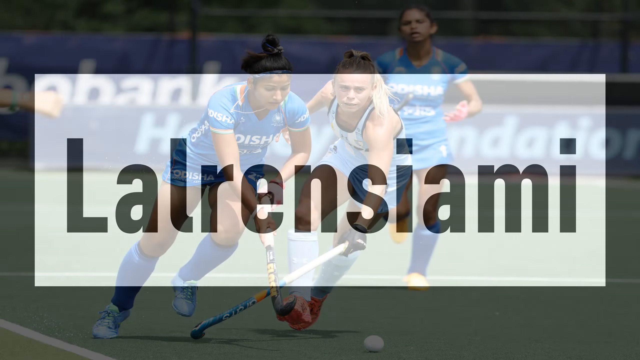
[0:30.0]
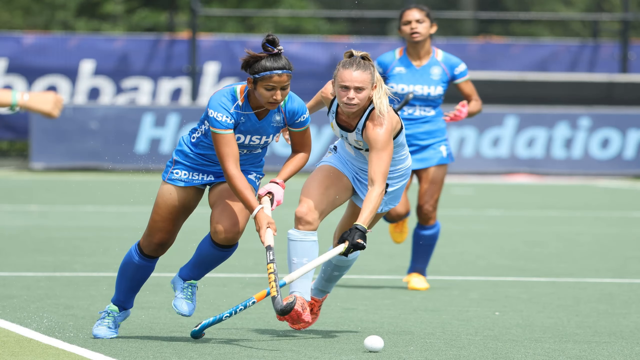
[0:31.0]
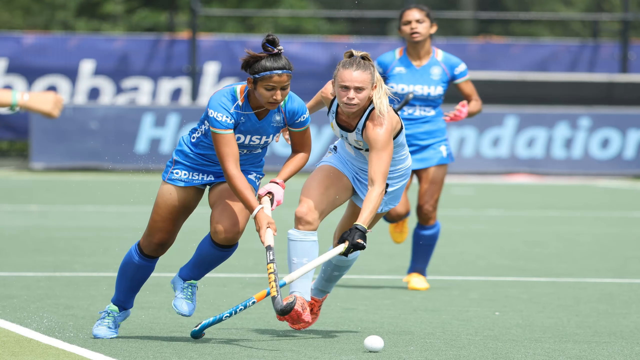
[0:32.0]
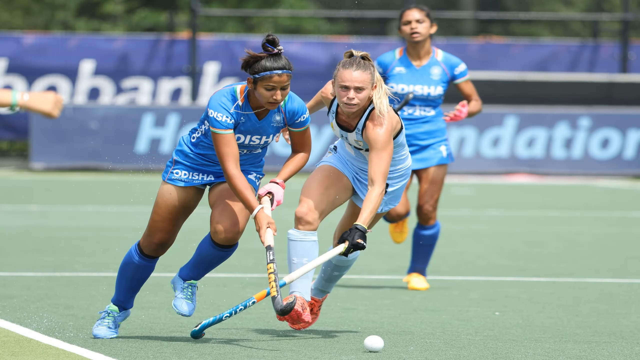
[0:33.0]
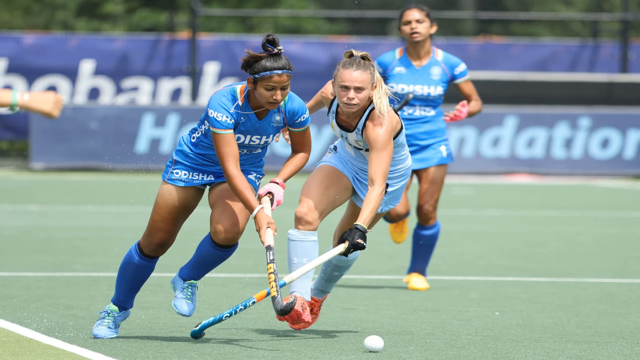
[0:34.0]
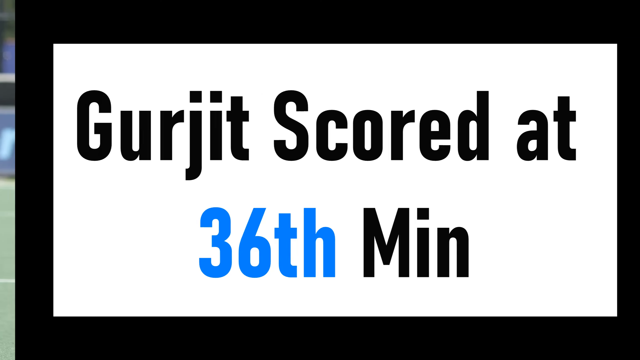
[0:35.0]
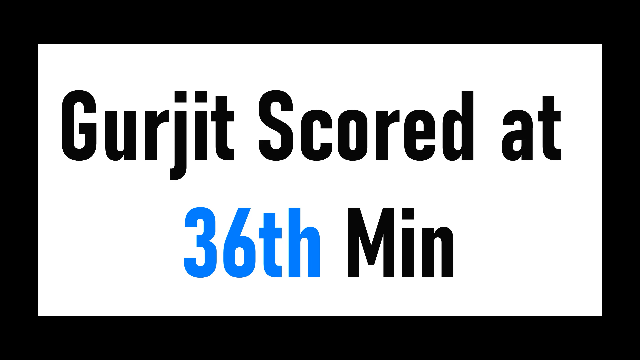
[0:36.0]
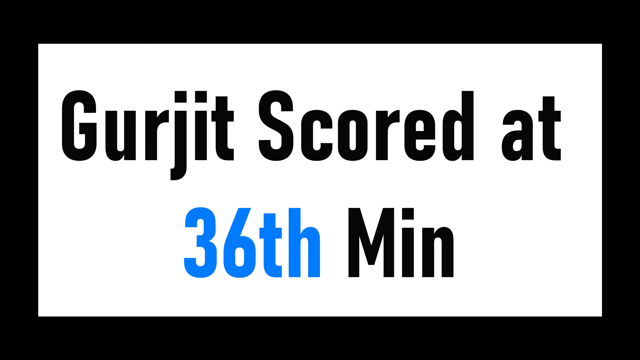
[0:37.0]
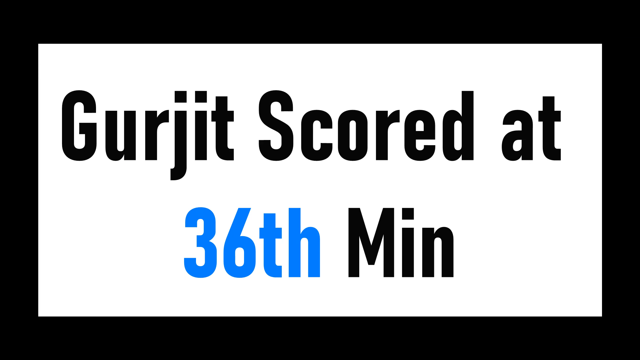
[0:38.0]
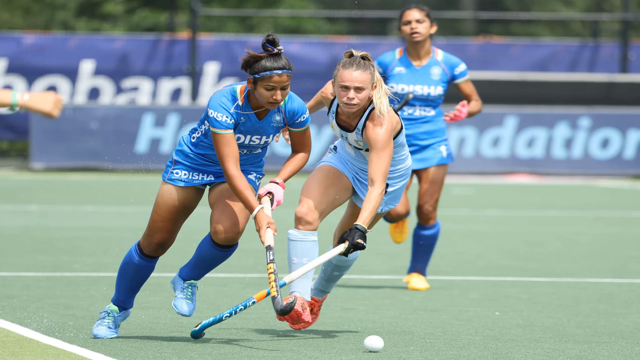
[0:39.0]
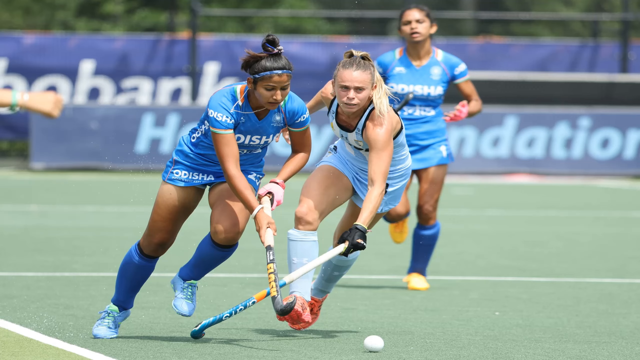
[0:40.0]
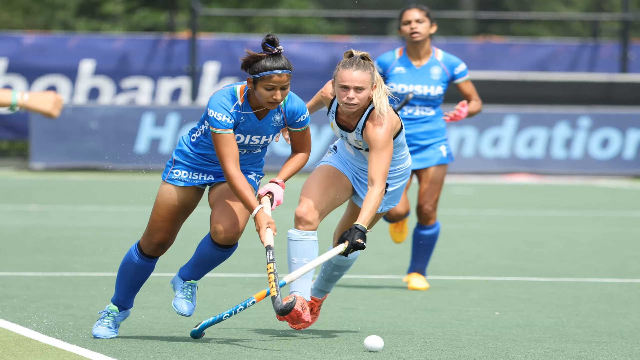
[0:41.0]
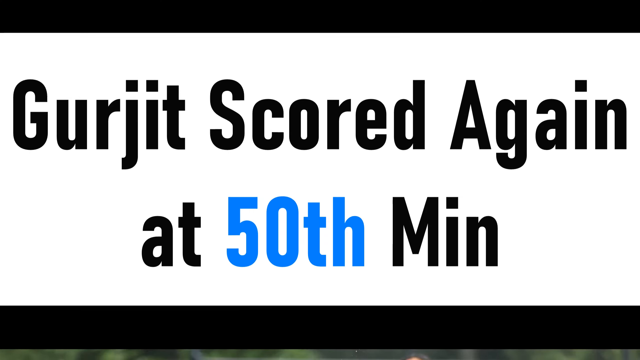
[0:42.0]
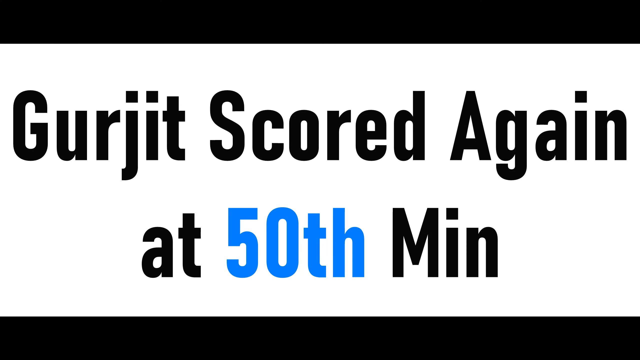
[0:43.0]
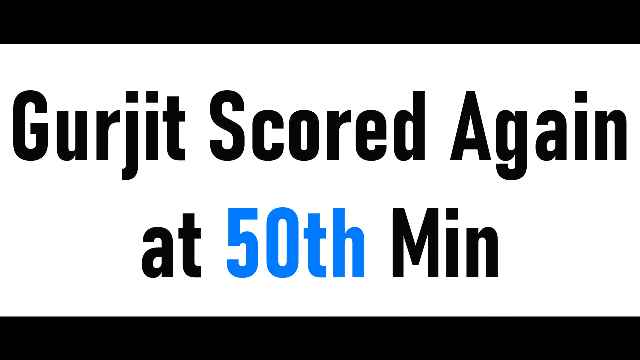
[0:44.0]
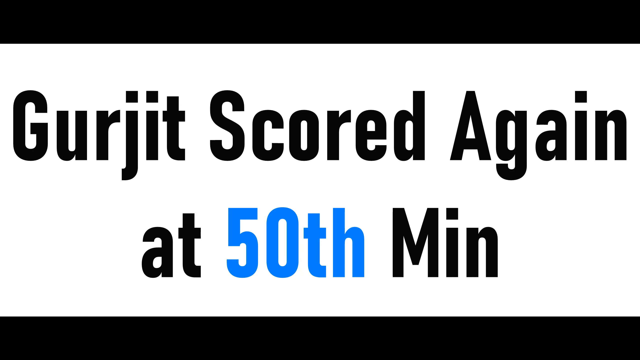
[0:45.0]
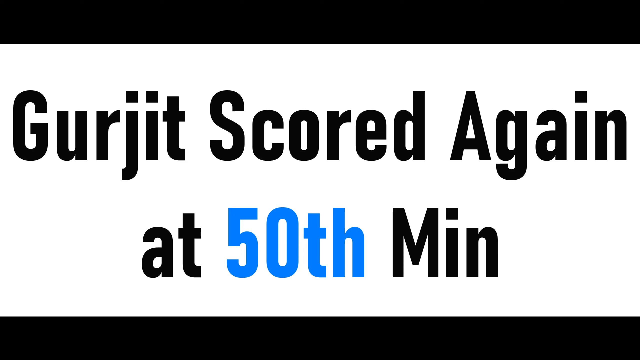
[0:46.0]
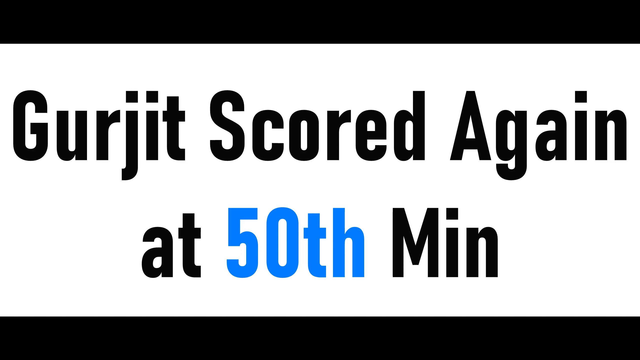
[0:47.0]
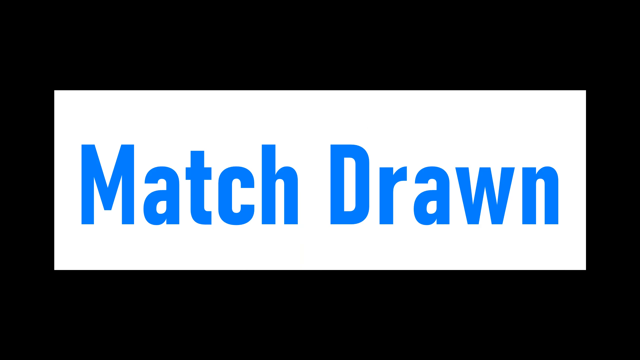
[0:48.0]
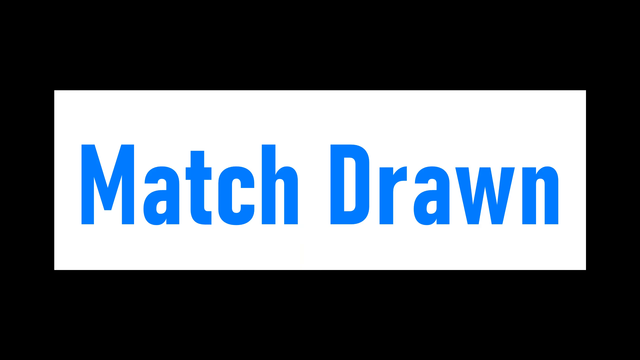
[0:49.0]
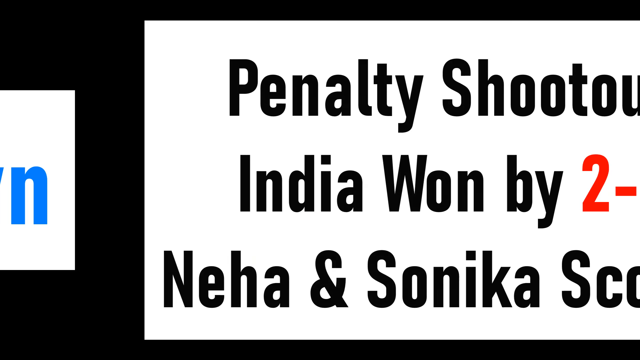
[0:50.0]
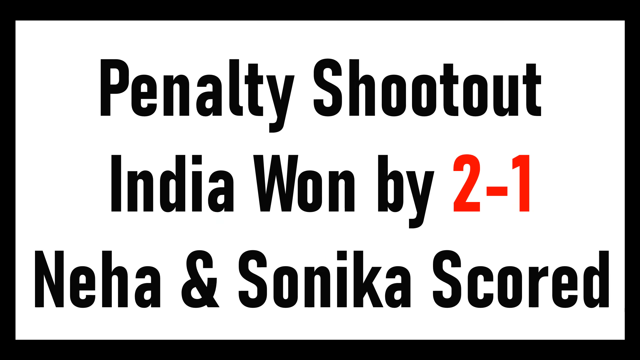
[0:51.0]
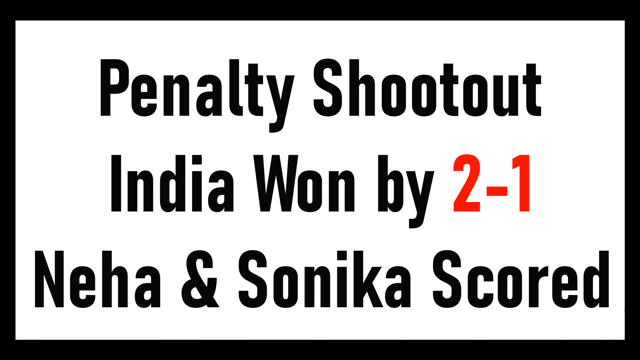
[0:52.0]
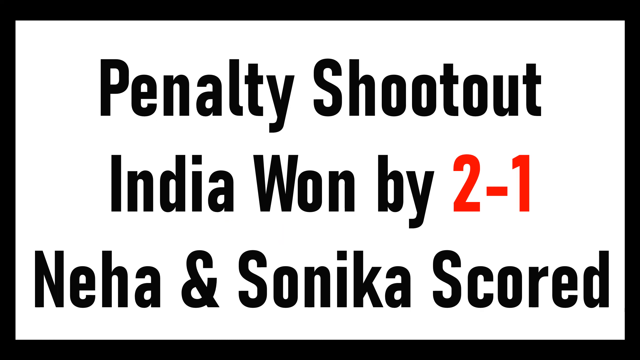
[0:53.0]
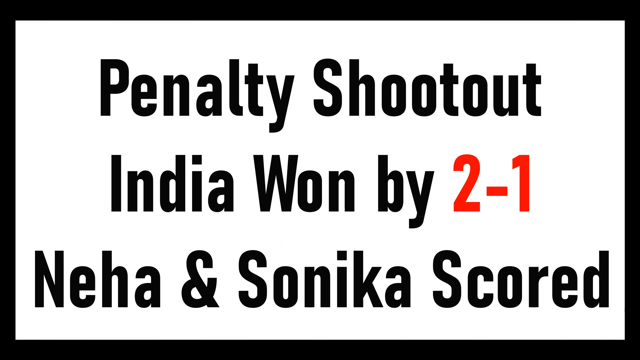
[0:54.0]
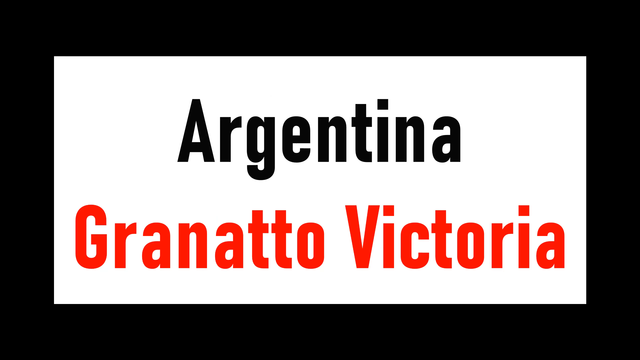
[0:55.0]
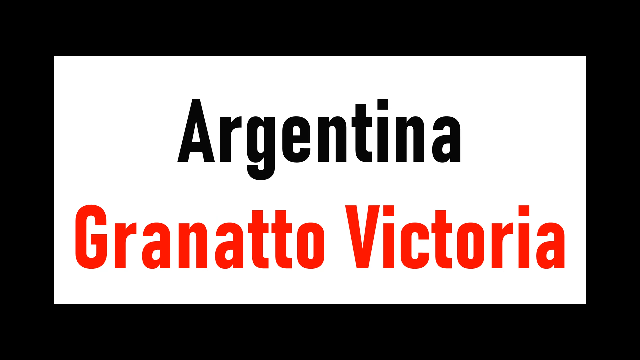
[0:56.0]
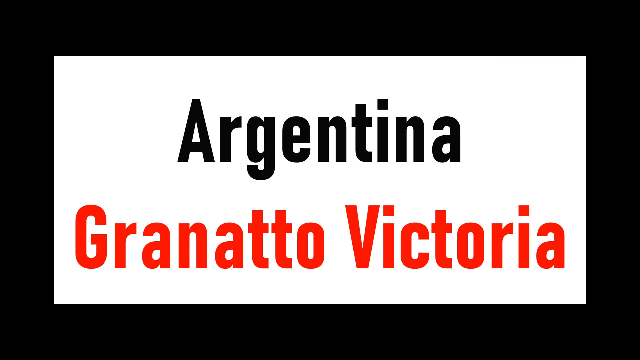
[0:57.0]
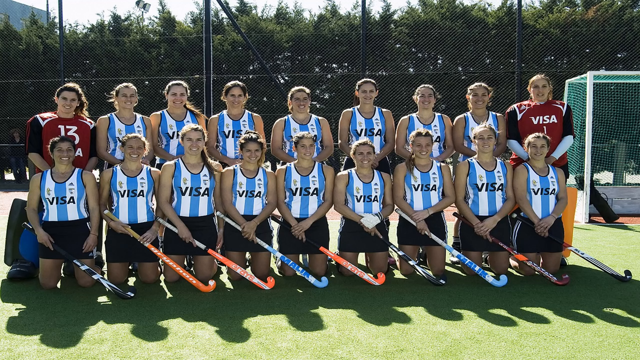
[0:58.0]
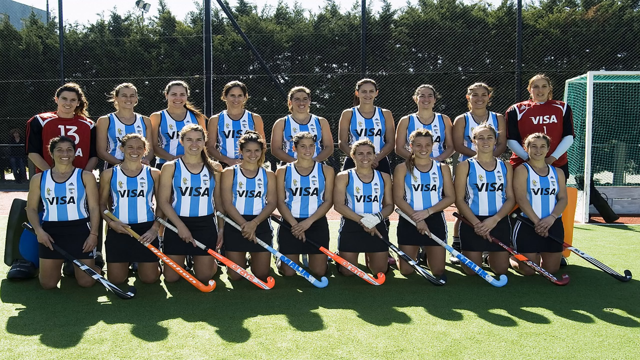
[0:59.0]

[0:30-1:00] A banner reading "Lawrence Yami" in black appears over an image of women who look like they are playing field hockey or something similar. They wear socks up to their knees; one team wears blue jerseys and blue shorts, the other wears white. It looks like an action shot on a field. A screen then reads "Gurgit scored at 36th minute", with "36th" in blue and the rest in black. The view flashes back to the girls playing field hockey, with text reading "Gurgit scored again. Match drawn. Penalty shootout. India won 2 to 1. Neha and Soneka scored." It then flashes to "Argentina" and "Granado, Victoria", along with a team portrait of a hockey team in blue and white tank tops that say "Visa" on the front. In the second row, one person at each end looks dressed as a goalie, in padded uniforms with shoulder pads.